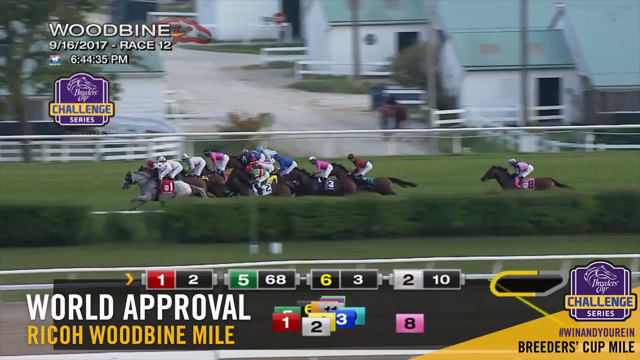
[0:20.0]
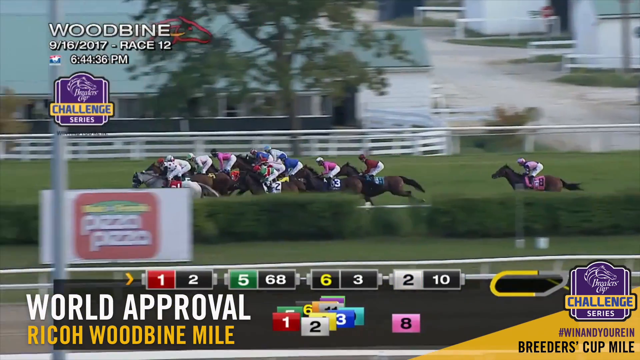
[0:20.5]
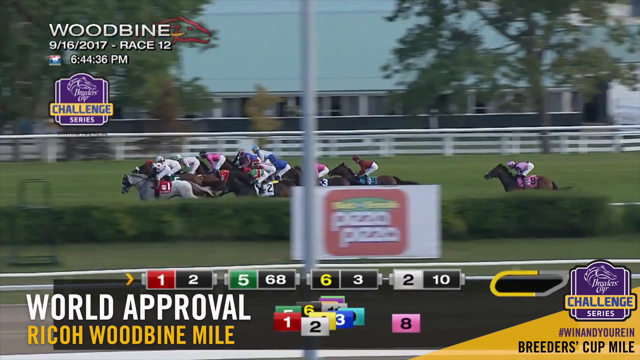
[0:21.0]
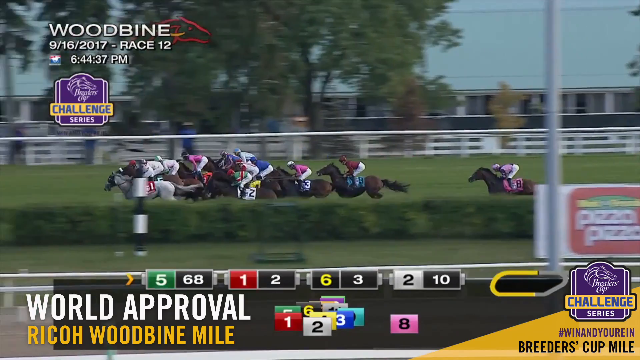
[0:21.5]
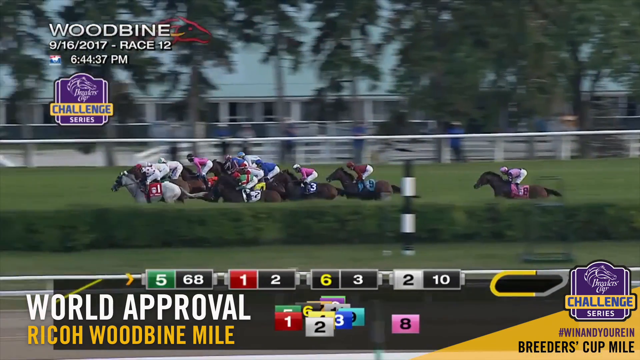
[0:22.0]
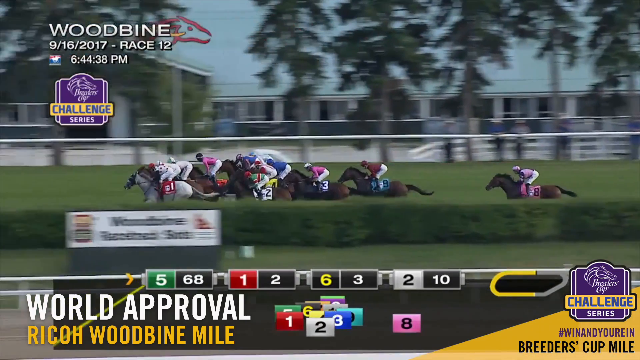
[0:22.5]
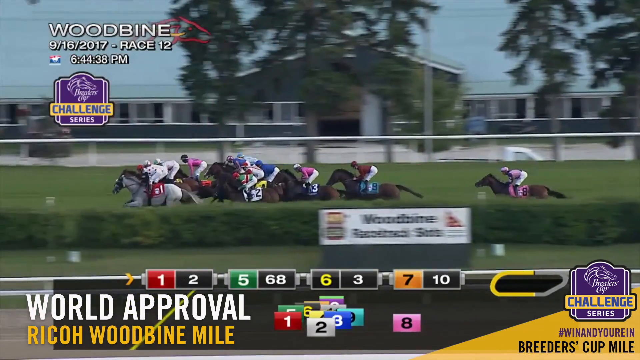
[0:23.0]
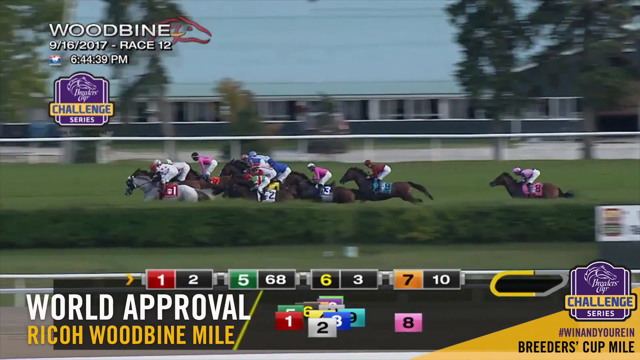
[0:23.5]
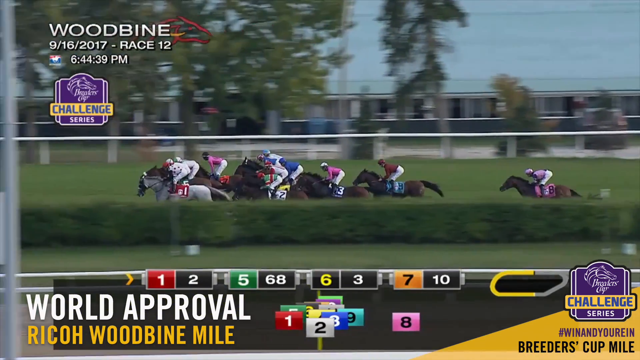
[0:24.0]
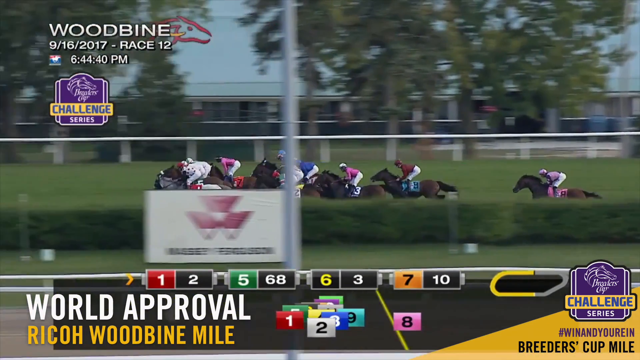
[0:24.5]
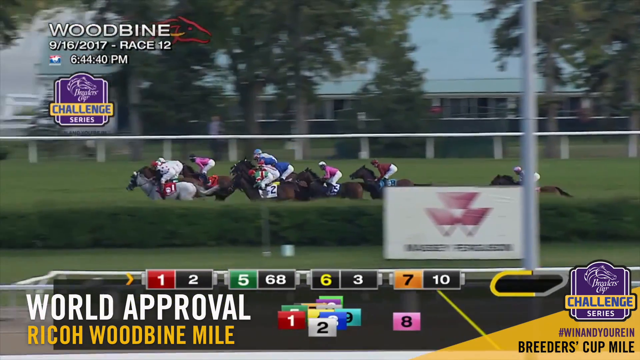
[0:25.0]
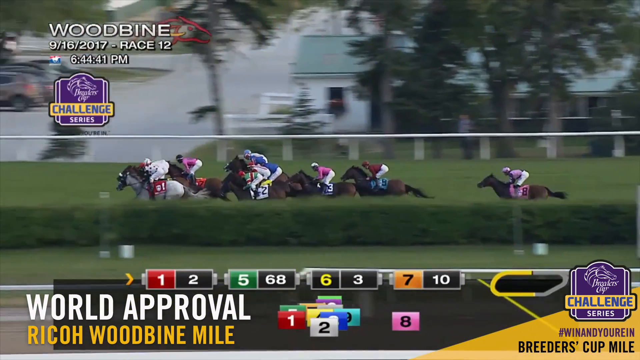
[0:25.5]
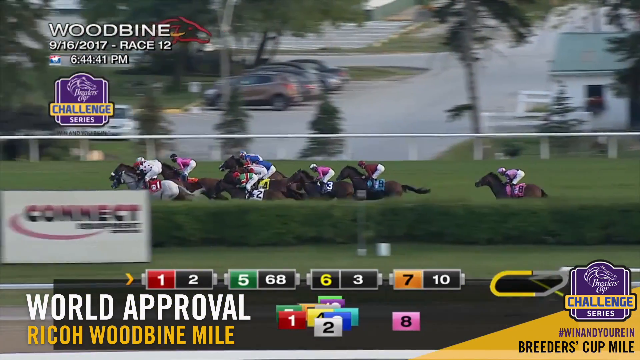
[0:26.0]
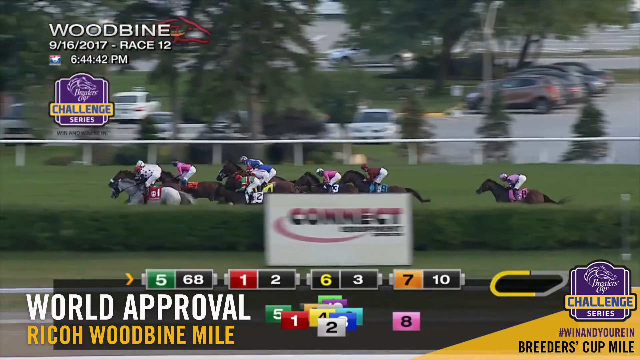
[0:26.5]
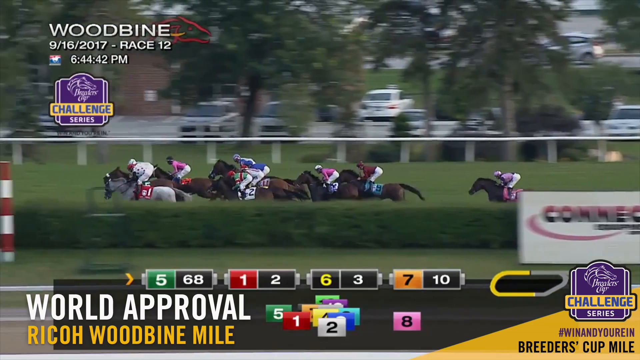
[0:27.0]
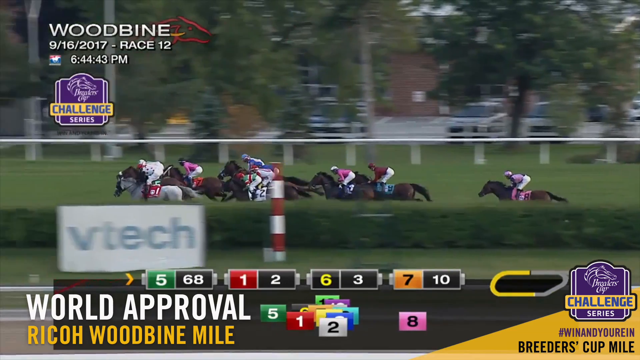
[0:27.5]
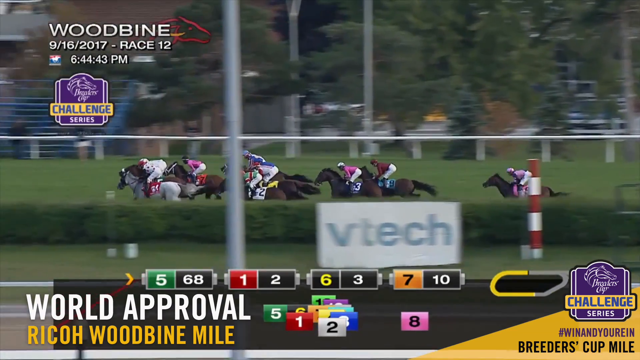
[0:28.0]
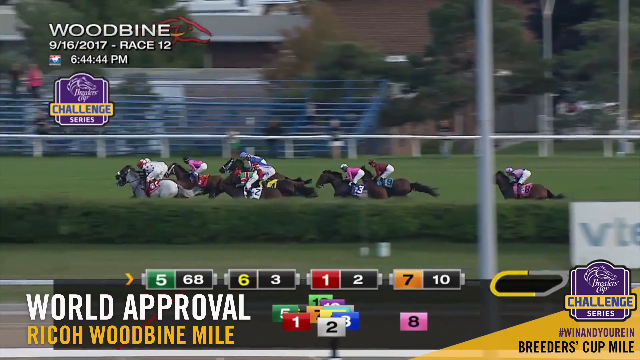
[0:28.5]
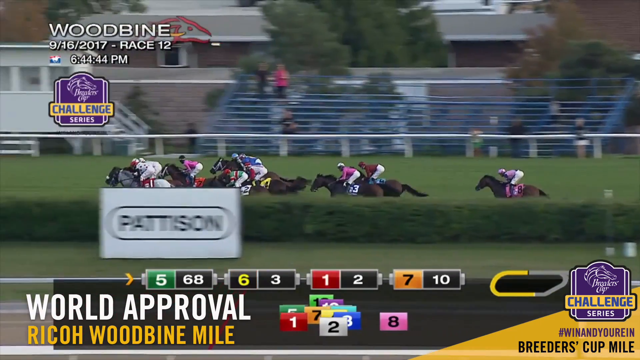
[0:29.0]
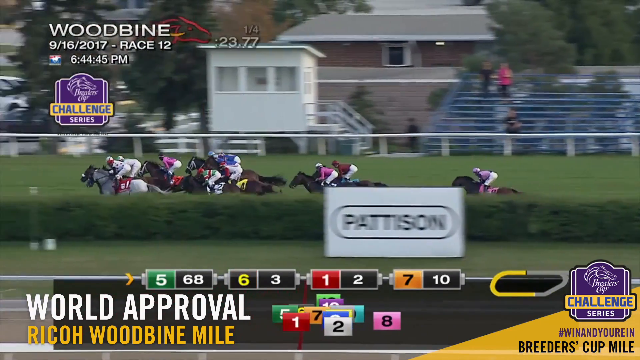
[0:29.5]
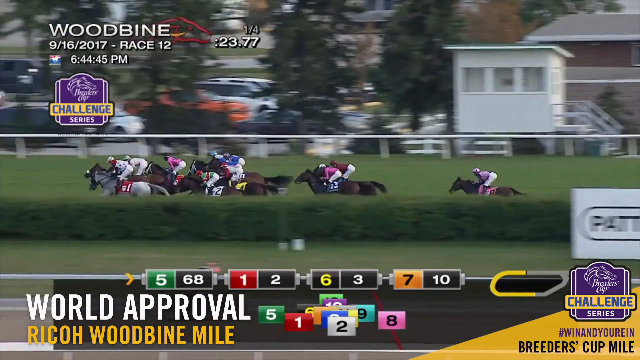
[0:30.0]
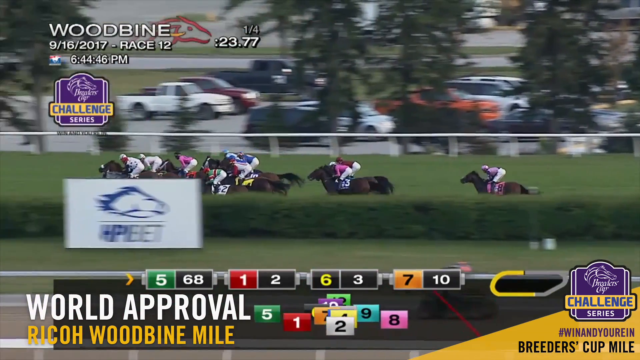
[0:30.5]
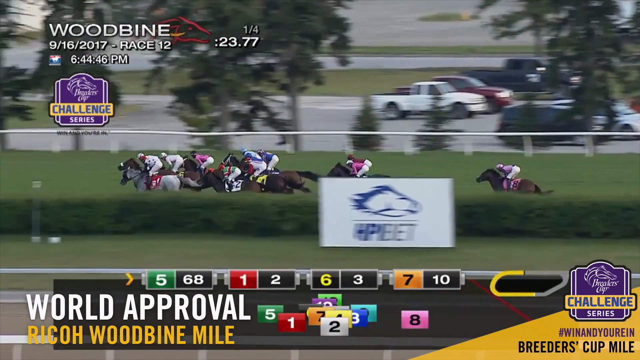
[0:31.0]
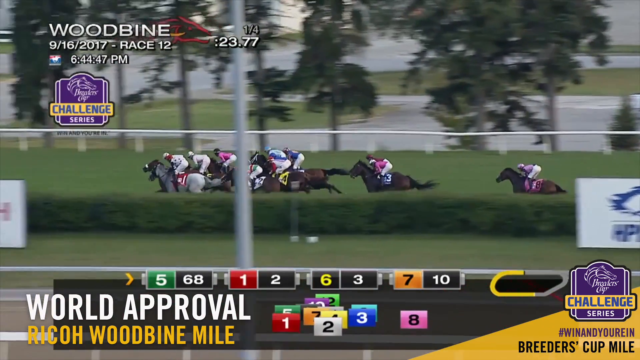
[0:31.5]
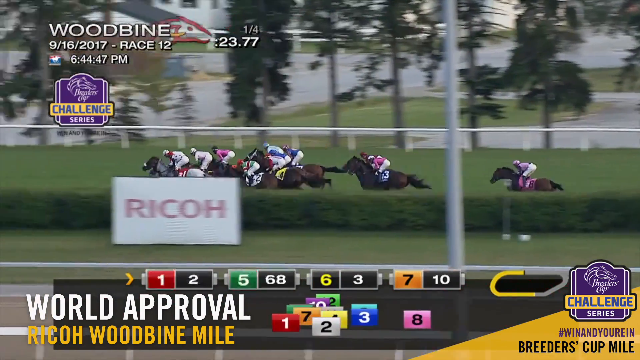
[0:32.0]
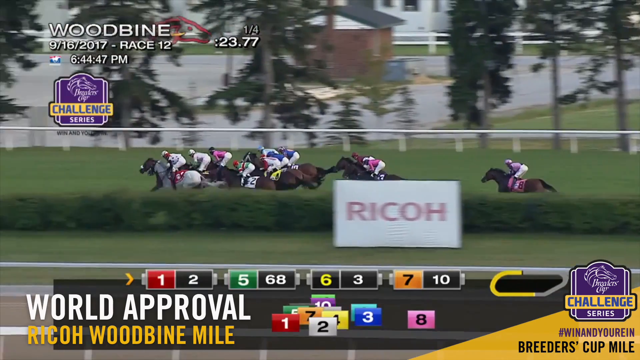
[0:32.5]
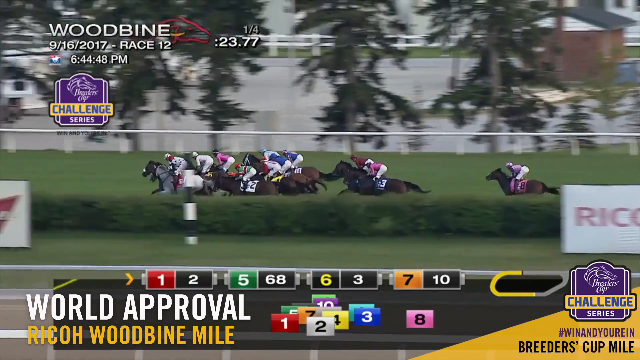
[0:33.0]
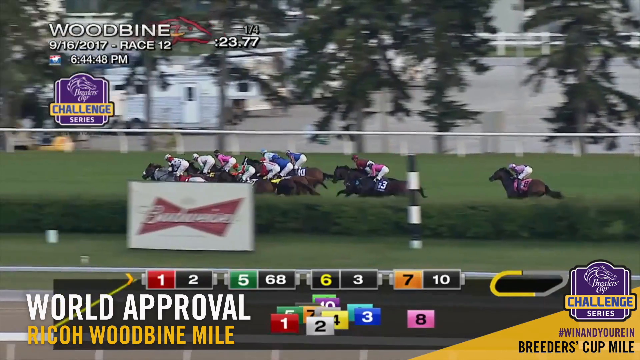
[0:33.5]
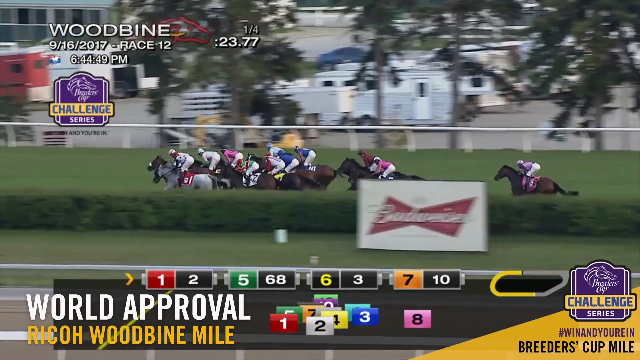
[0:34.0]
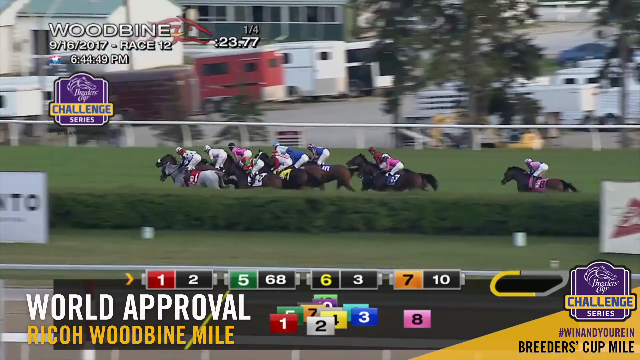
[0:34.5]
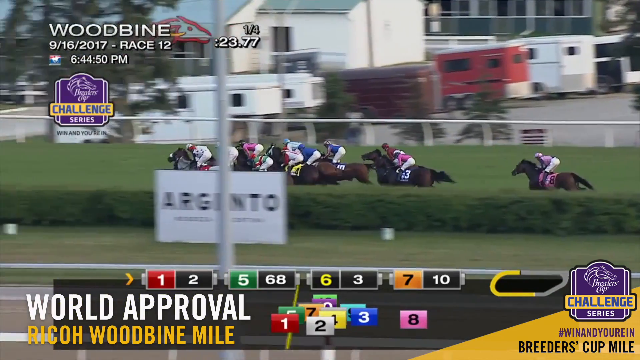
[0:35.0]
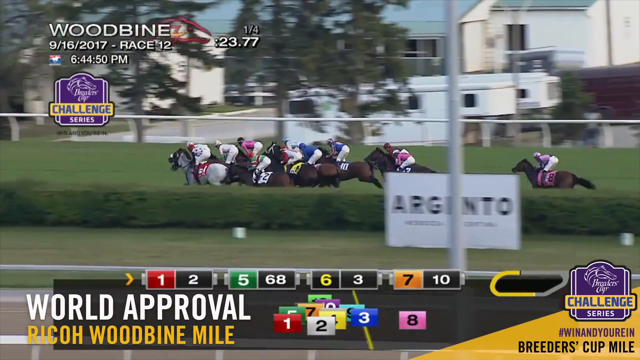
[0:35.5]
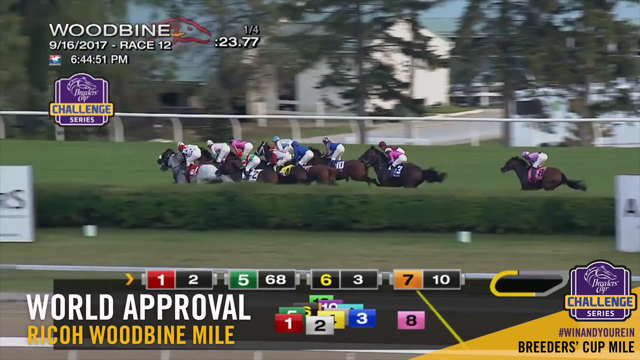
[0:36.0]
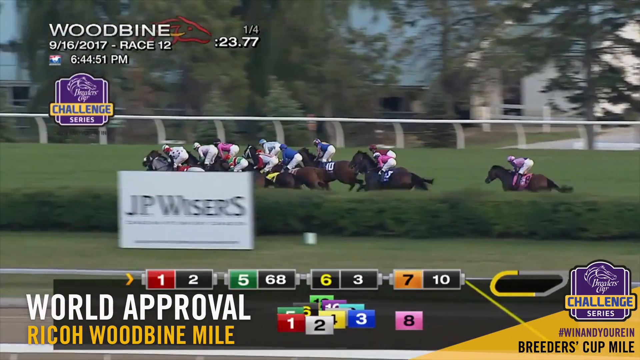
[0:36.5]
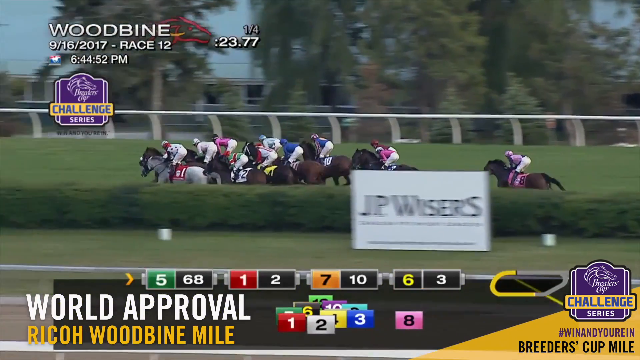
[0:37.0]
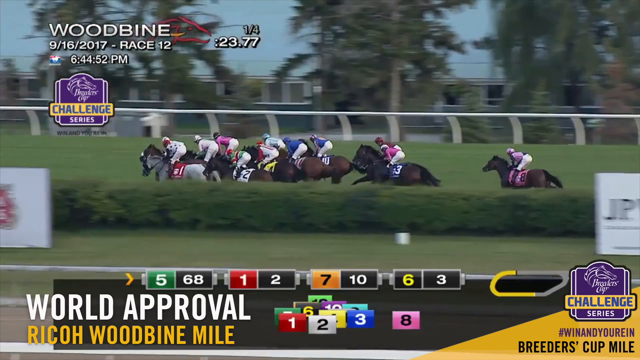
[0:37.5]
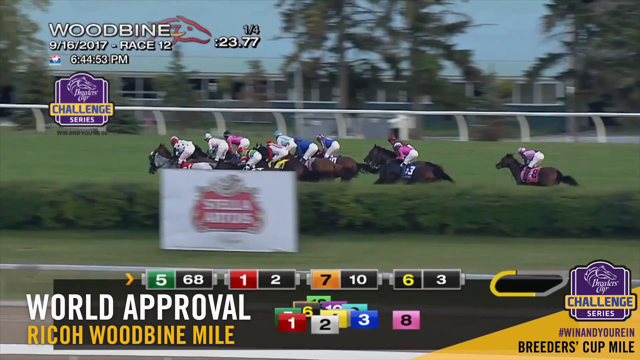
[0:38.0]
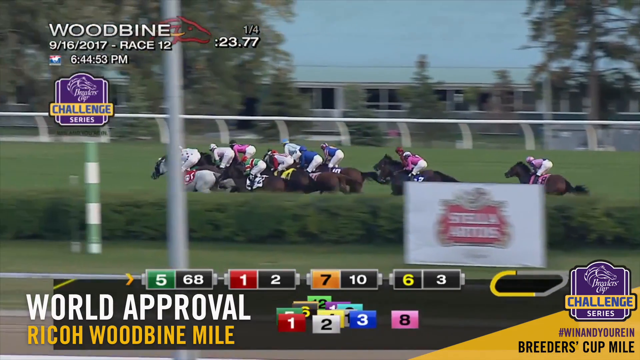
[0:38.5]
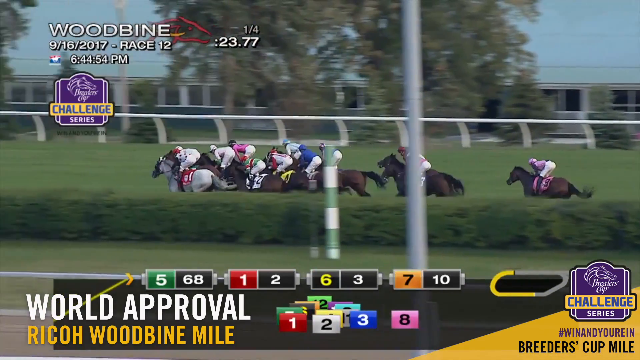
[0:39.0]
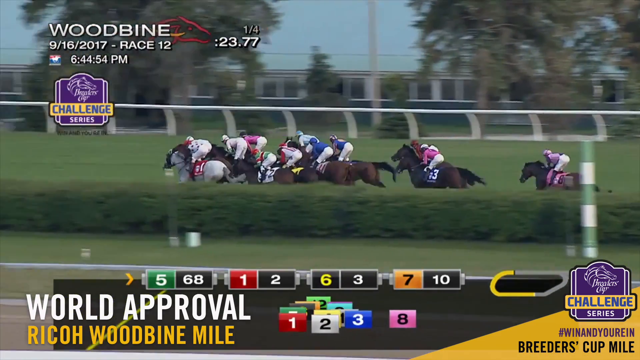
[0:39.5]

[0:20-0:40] Number 8 is still far at the back, while number 1 and number 5 appear to be very close together for first place. Number 1 wears the red saddle and number 2 the green one. The horses and jockeys continue to race in what appears to be an anti-clockwise direction, from the right-hand side of the screen towards the left. At the bottom of the screen, somewhat difficult to read, are the numbers and colours of each horse and jockey and their relative positions in the race. Number 9 appears to be second last of the 12, while number 8 remains consistently in last place. In the background, there are lots of trees outside the white railings of the racecourse, and on the inner side of the course there appears to be a hedge. The racecourse is grass, with some stands and car parks behind the railings.